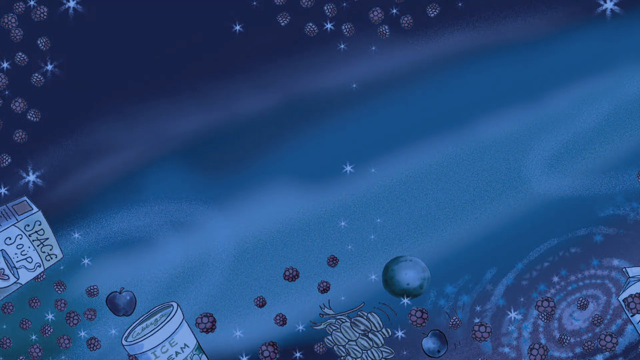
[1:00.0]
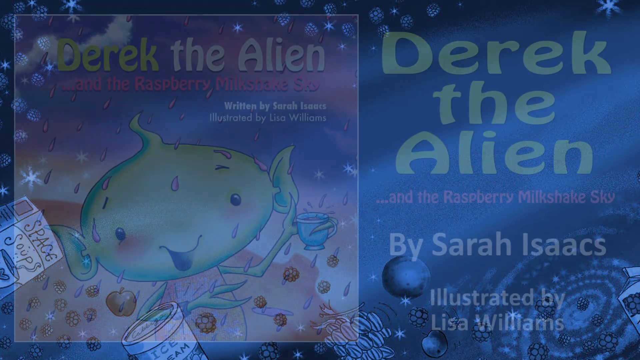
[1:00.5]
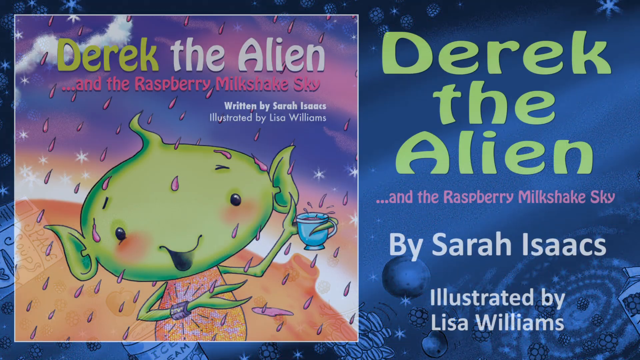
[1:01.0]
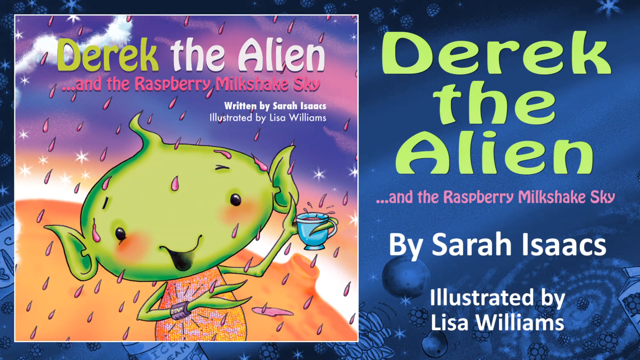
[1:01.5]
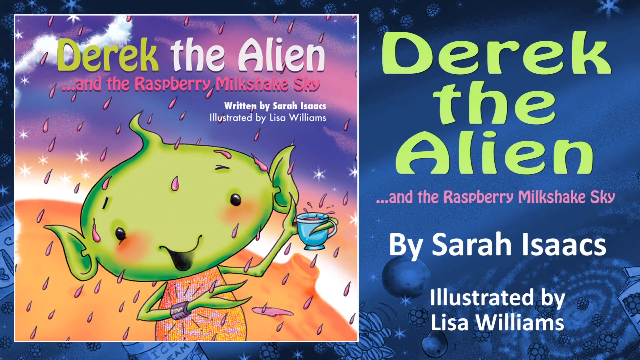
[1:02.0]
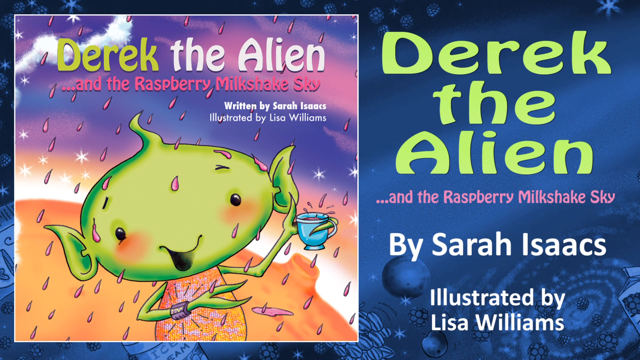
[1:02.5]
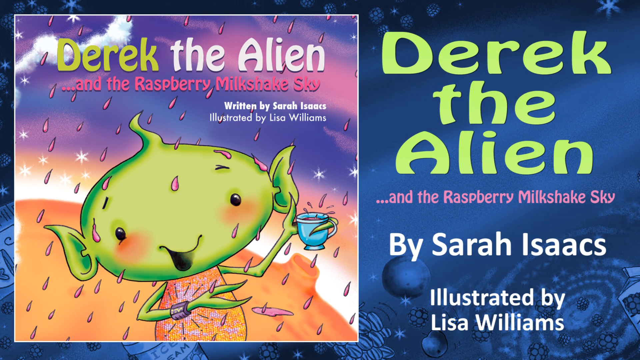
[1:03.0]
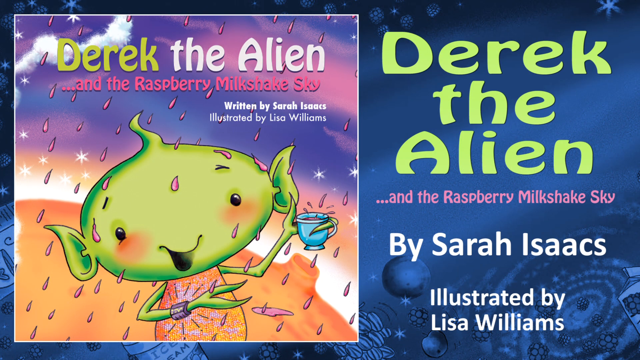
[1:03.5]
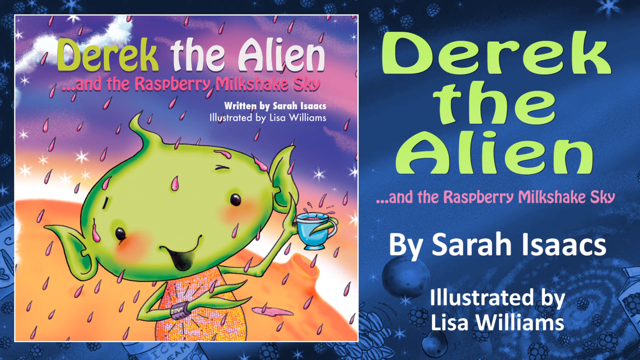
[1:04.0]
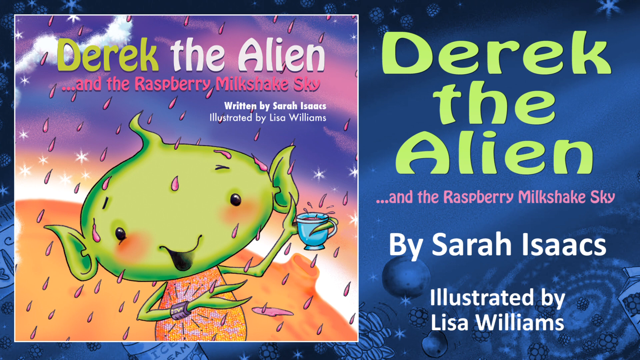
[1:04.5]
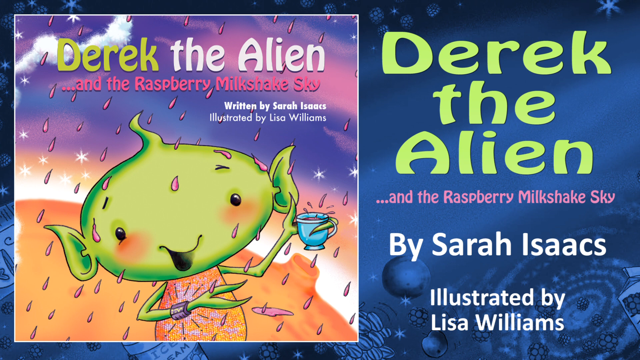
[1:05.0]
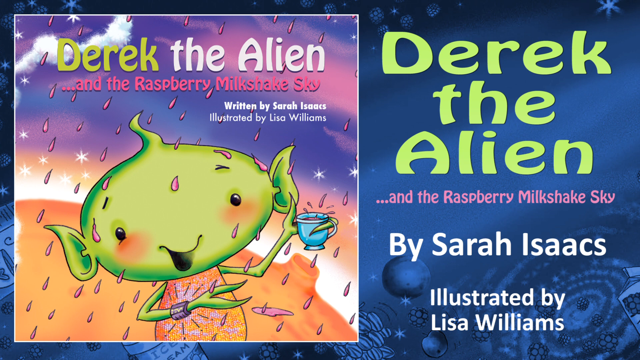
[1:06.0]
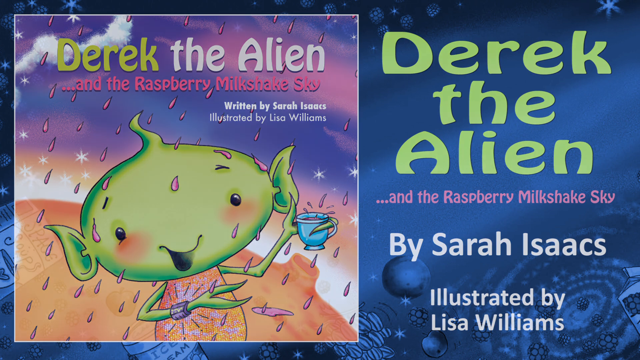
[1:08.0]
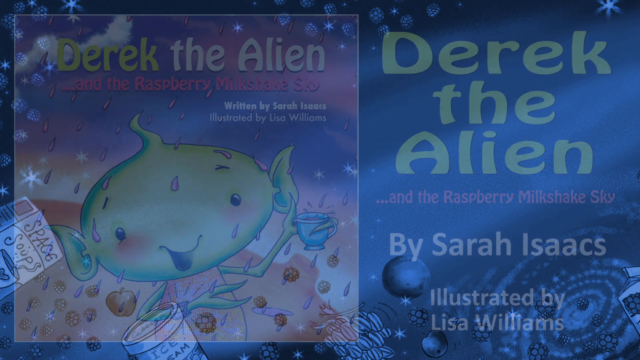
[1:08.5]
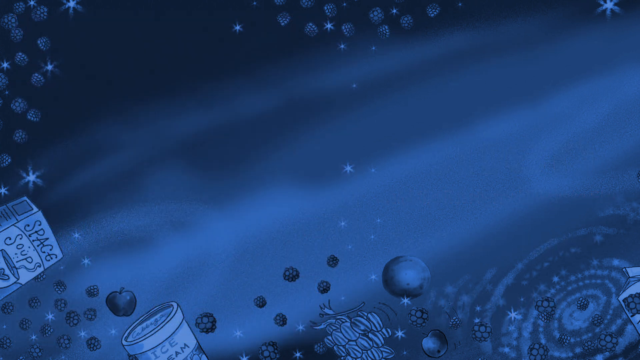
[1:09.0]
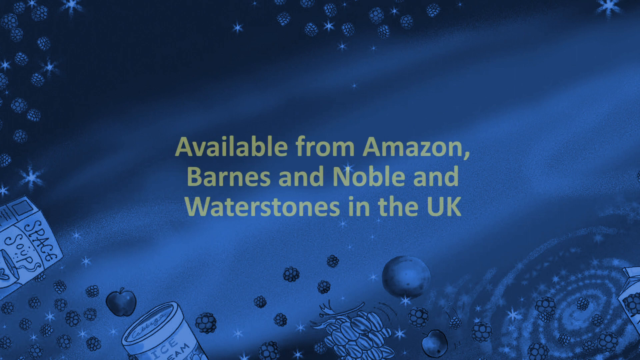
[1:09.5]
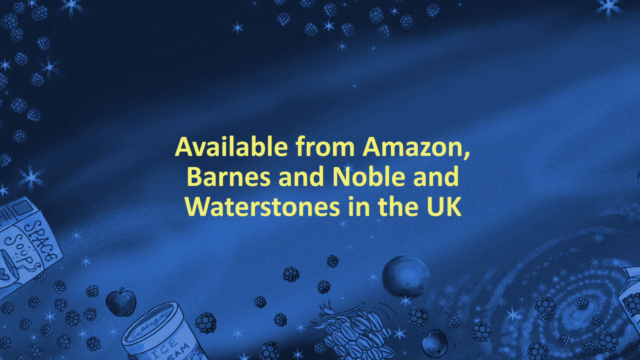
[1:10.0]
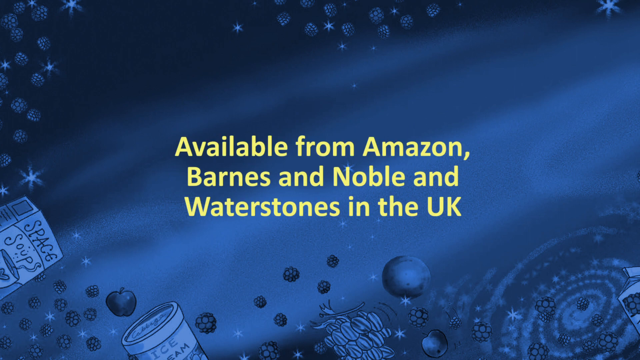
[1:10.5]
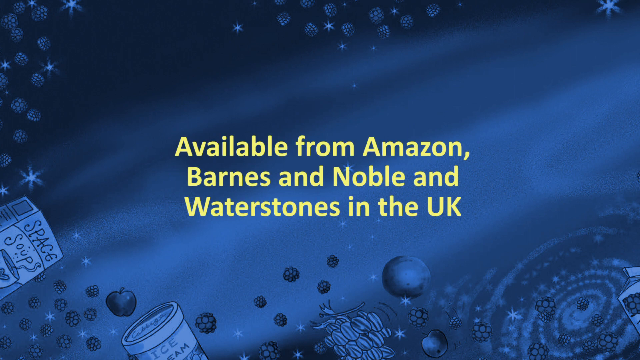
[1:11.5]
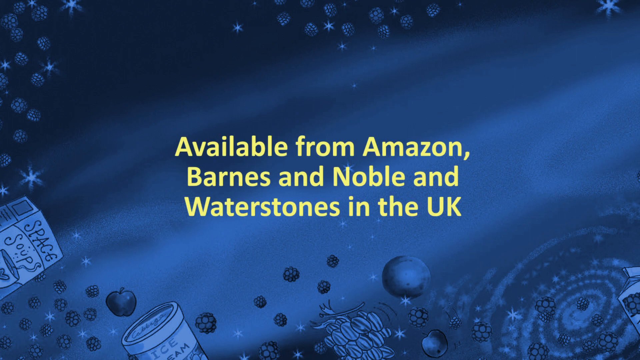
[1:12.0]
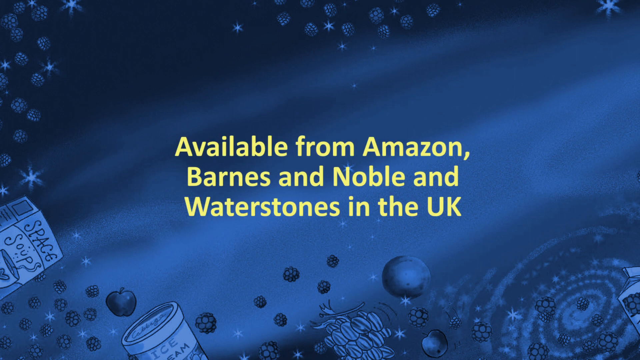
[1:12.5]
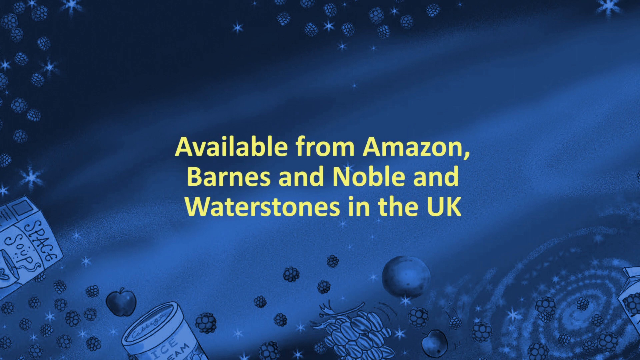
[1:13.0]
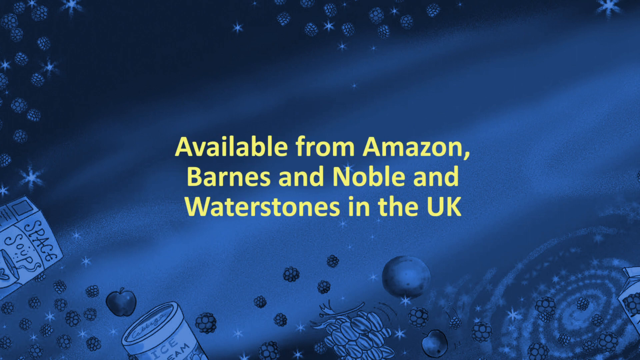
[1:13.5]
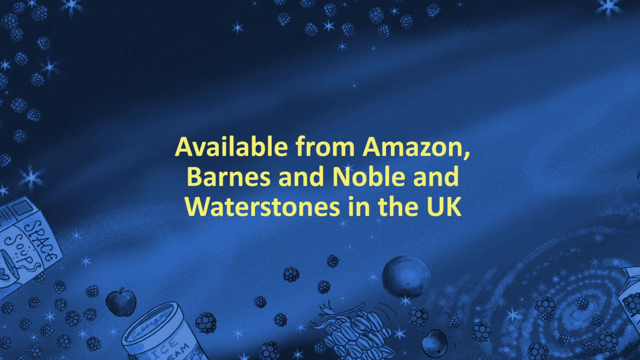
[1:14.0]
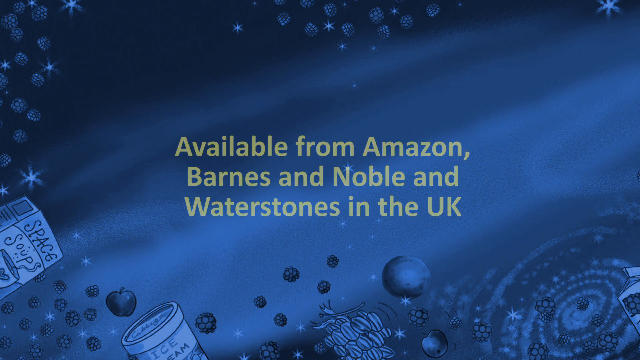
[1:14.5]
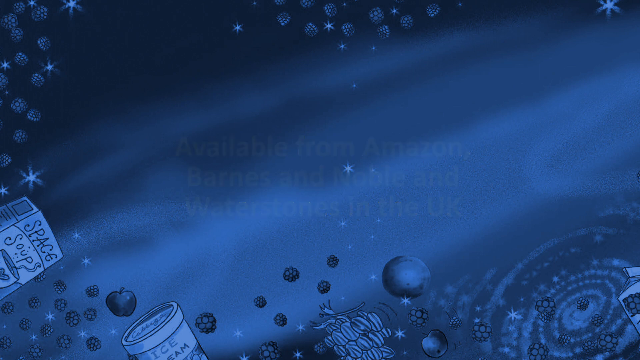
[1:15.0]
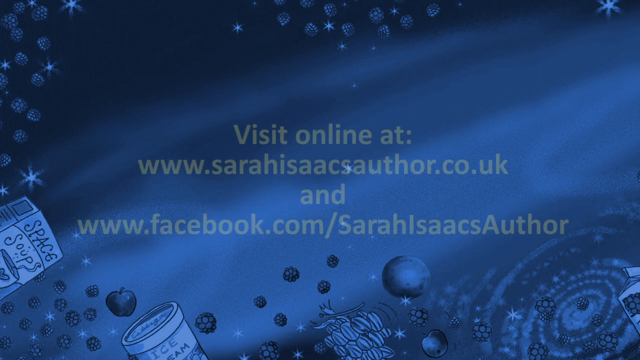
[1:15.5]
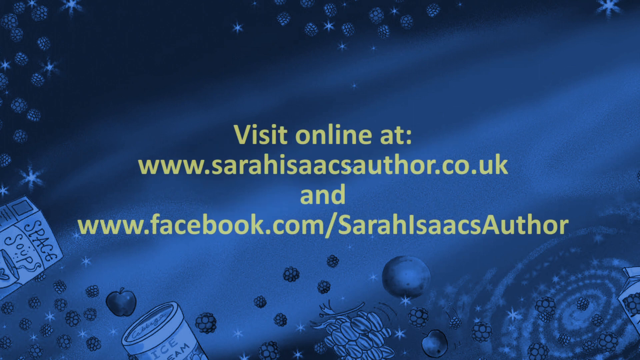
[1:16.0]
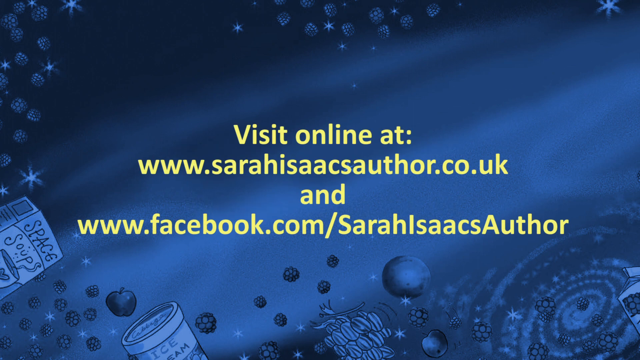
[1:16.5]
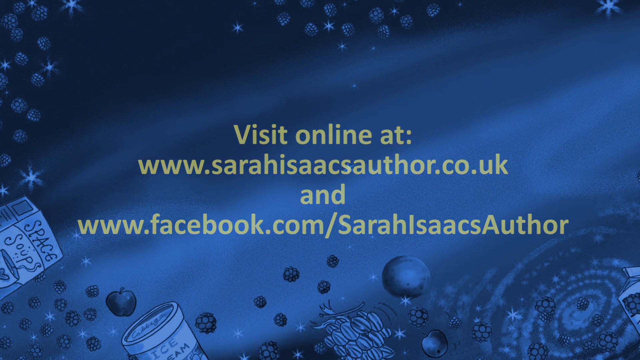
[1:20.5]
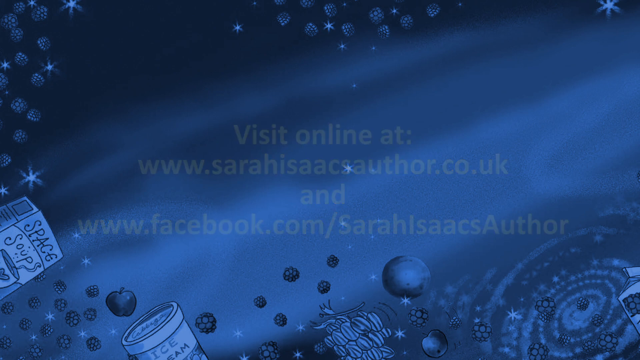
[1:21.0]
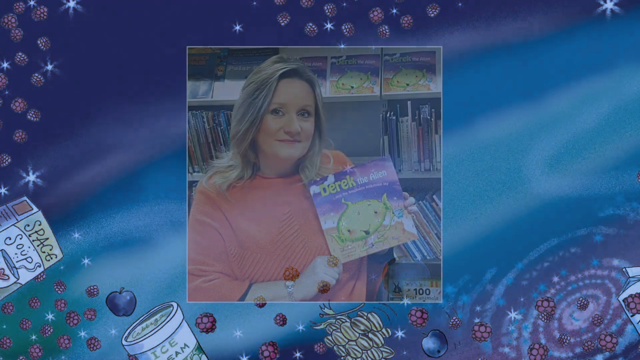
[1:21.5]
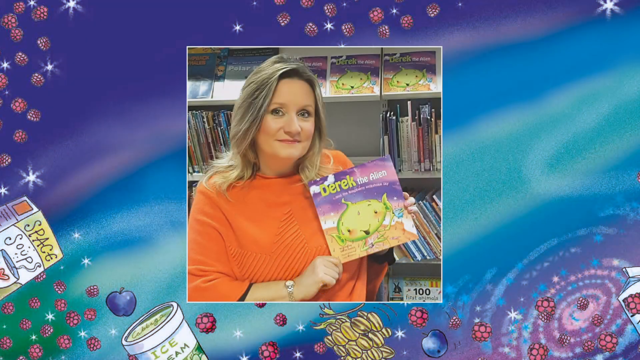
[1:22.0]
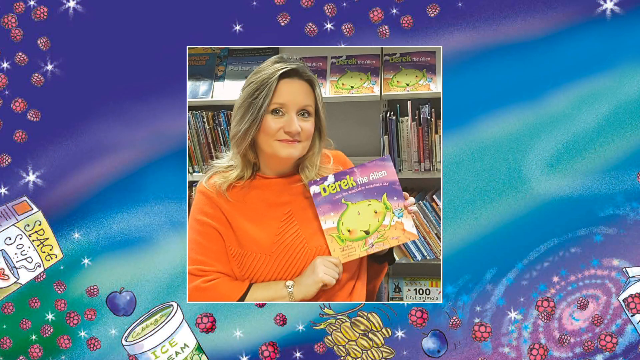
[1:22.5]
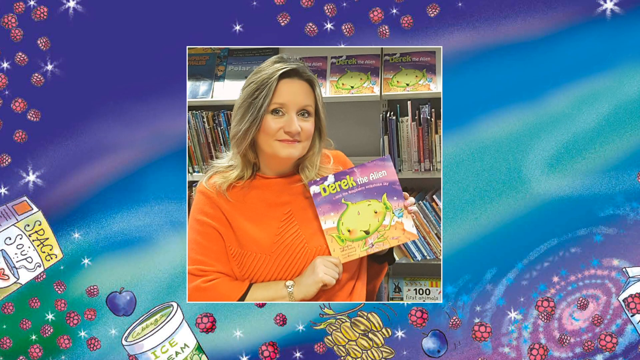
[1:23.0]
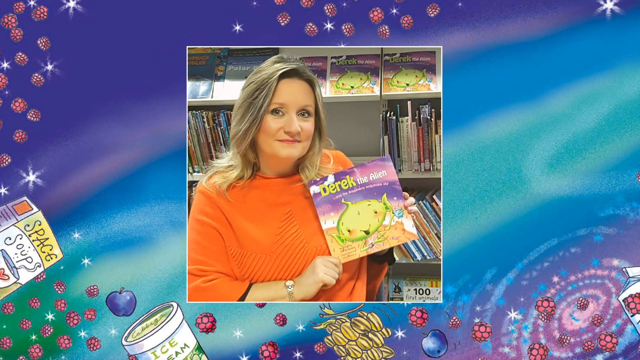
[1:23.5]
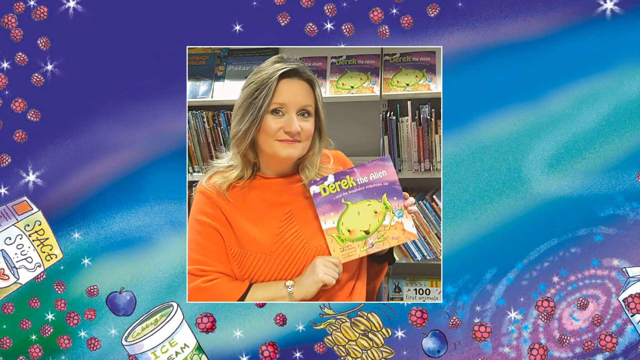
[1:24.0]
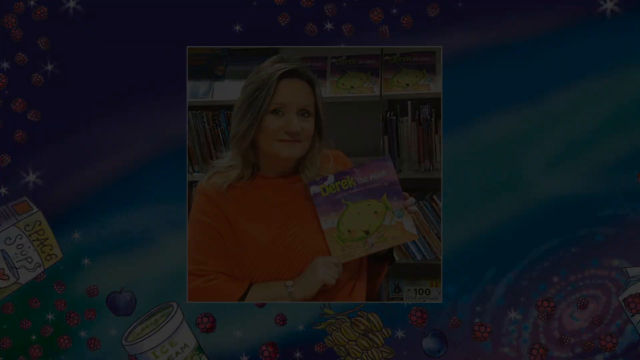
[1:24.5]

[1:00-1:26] A dark blue sky fades into purple, and fruit still seems to be flowing around a little; the floating items are possibly raspberries. The title "Derek the alien in the raspberry milkshake sky" is shown. The video shows that the book is from Amazon and Barnes and Noble and can be purchased there, and it shows where to visit online to get the book. At the end, the author of the book appears to be shown holding it. The video seems to be a trailer advertising the book.